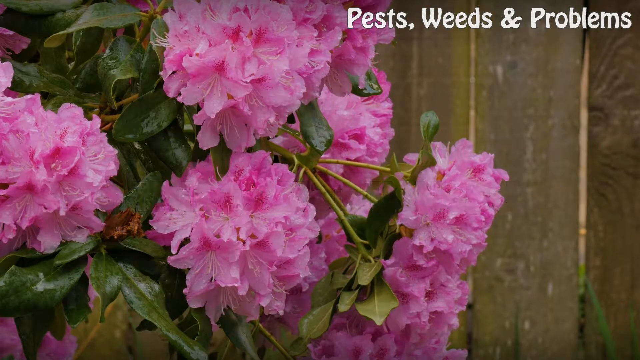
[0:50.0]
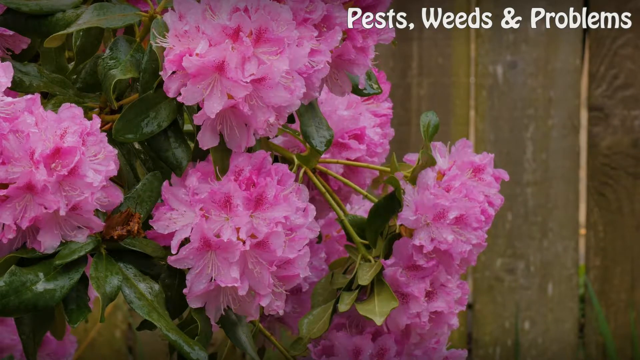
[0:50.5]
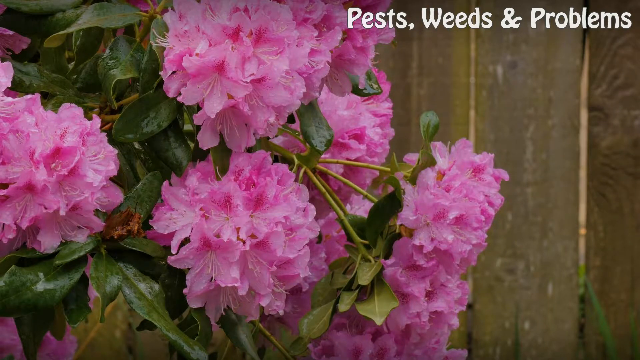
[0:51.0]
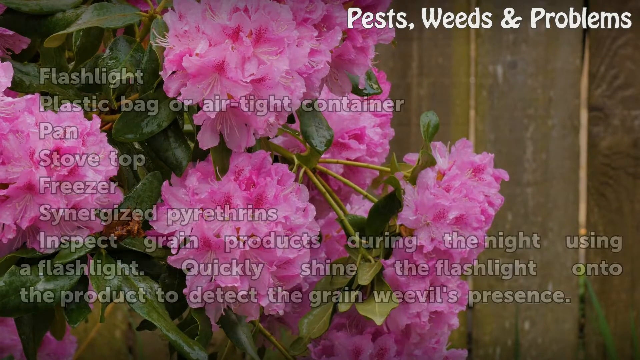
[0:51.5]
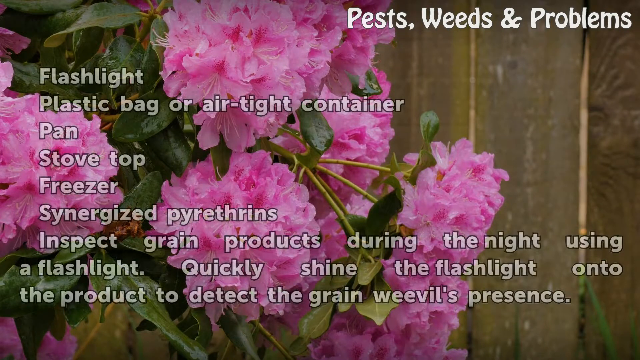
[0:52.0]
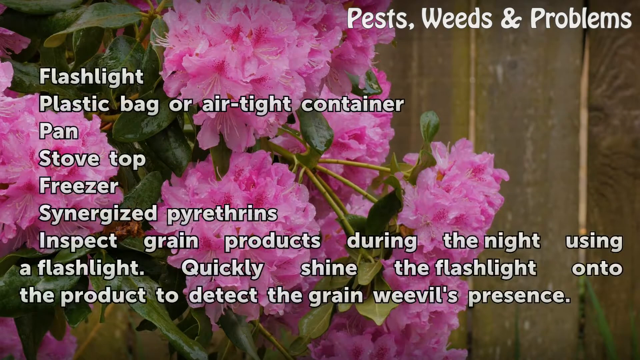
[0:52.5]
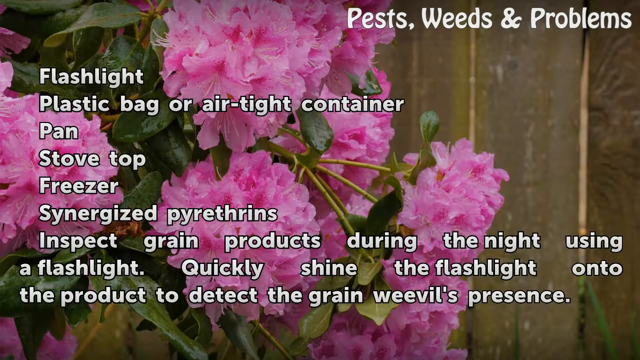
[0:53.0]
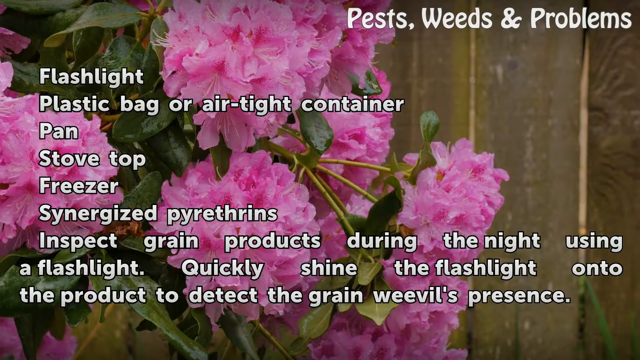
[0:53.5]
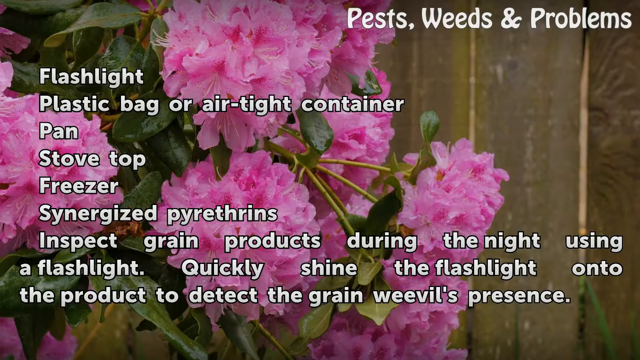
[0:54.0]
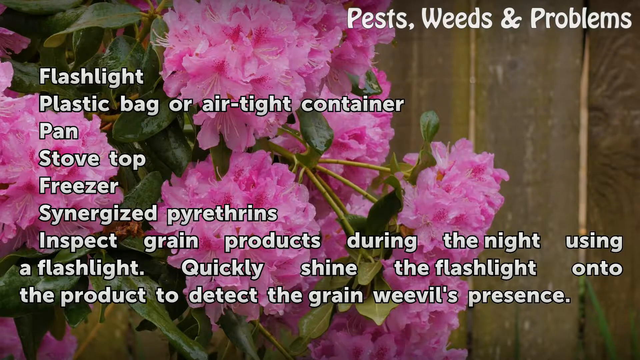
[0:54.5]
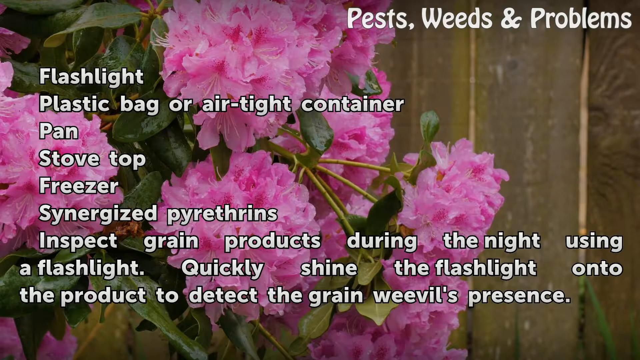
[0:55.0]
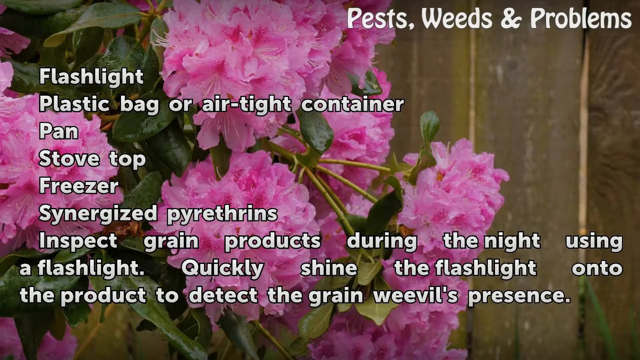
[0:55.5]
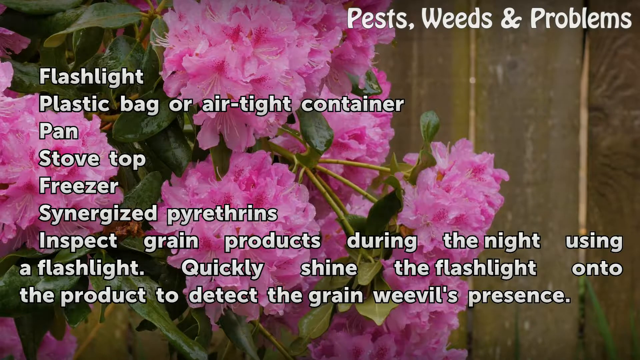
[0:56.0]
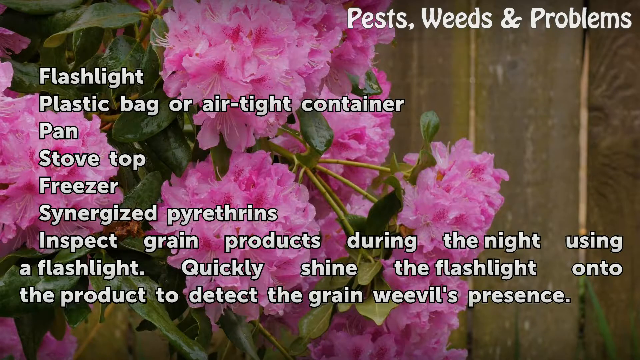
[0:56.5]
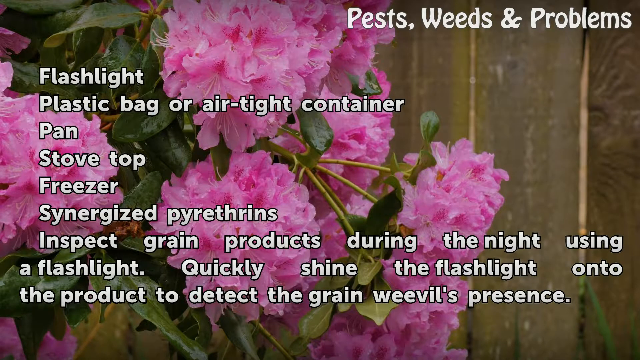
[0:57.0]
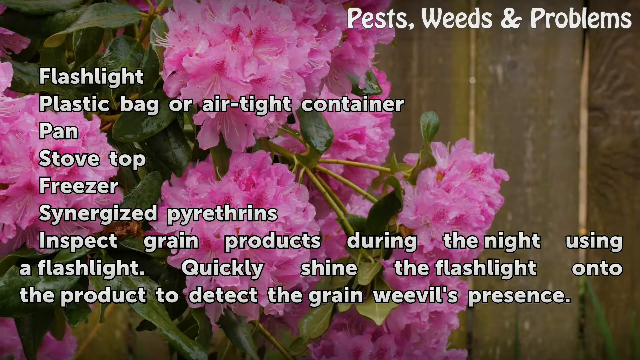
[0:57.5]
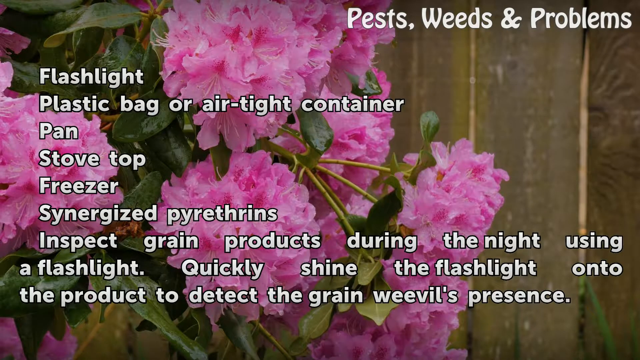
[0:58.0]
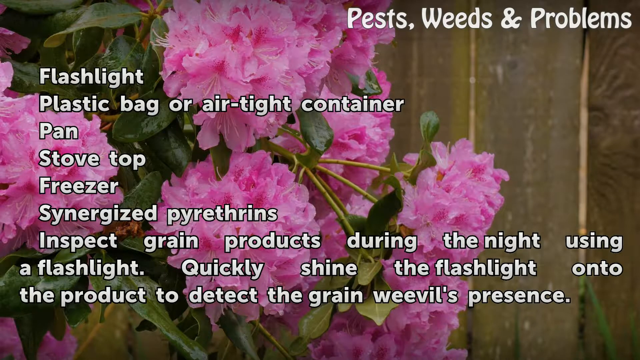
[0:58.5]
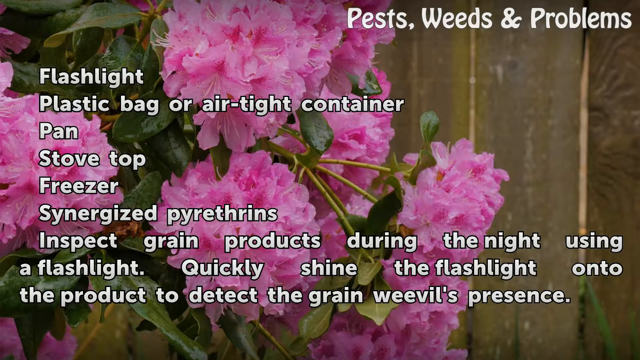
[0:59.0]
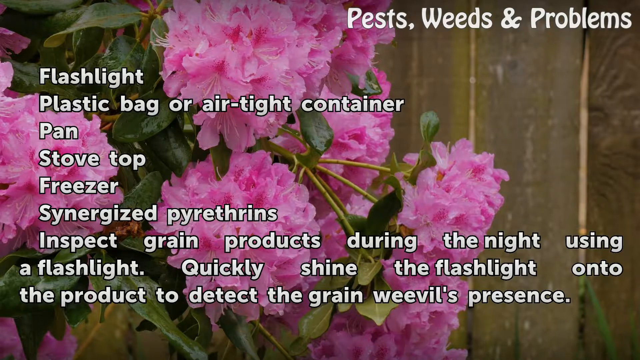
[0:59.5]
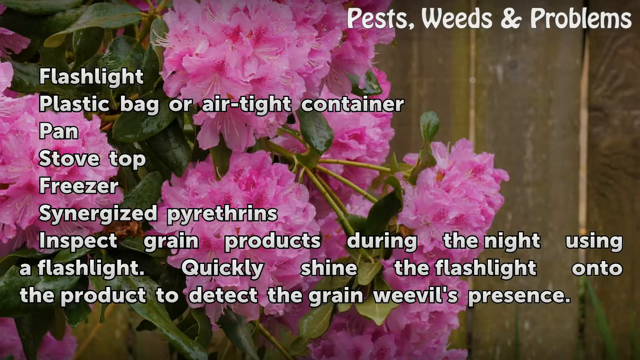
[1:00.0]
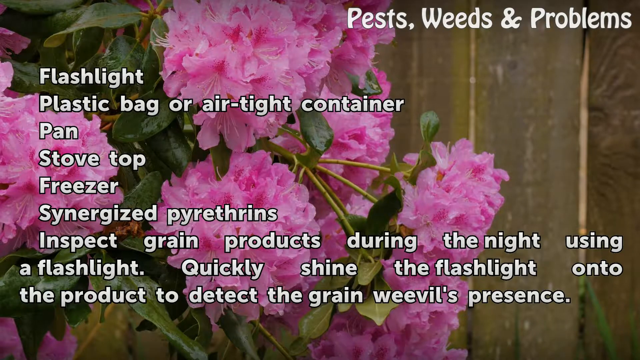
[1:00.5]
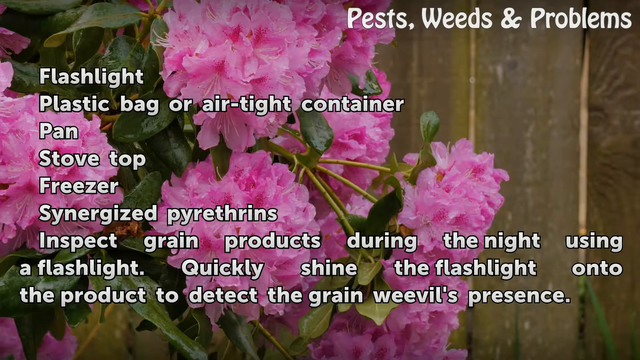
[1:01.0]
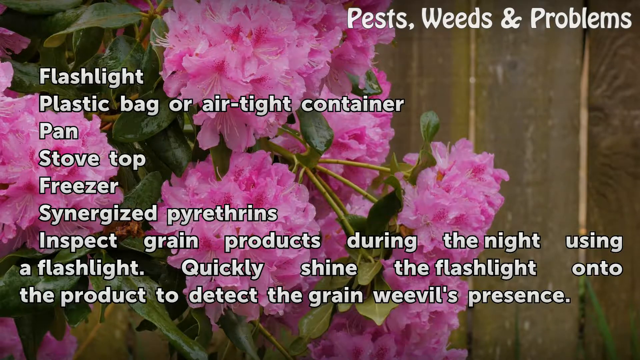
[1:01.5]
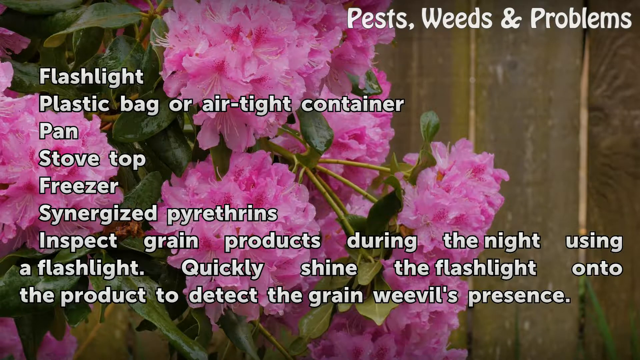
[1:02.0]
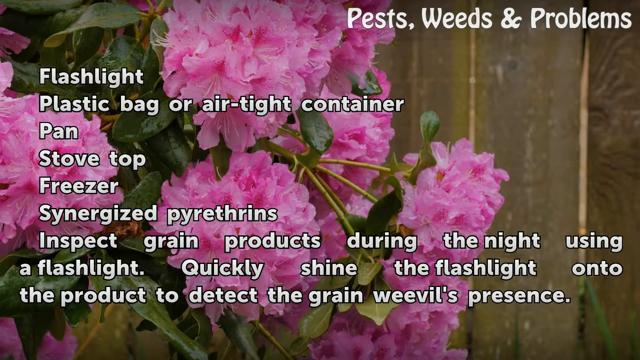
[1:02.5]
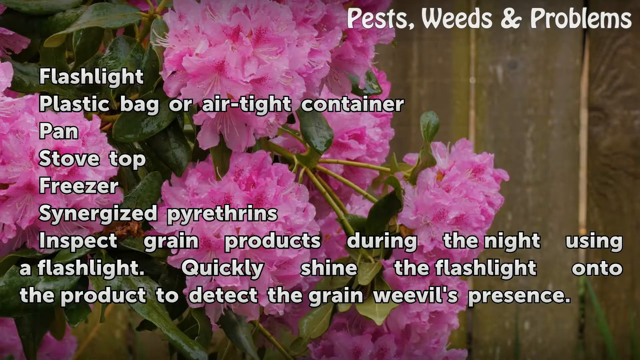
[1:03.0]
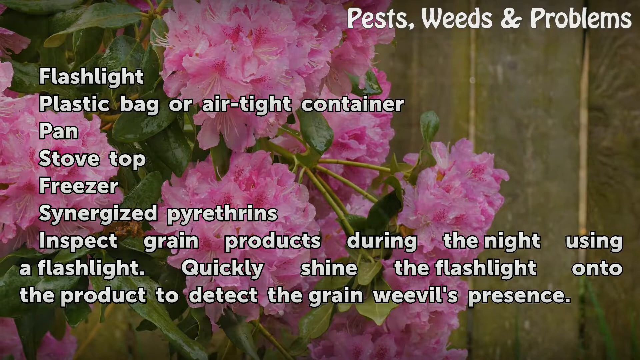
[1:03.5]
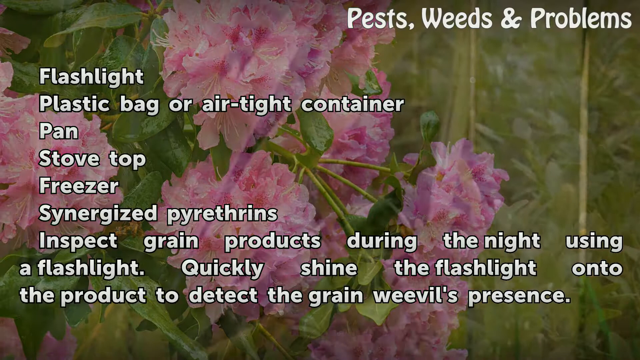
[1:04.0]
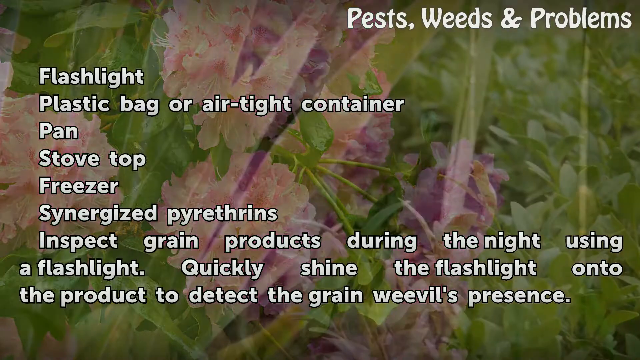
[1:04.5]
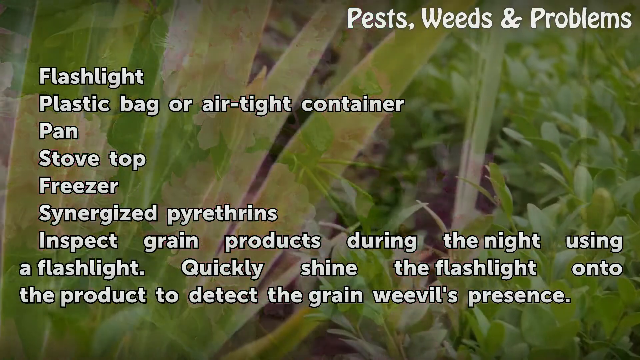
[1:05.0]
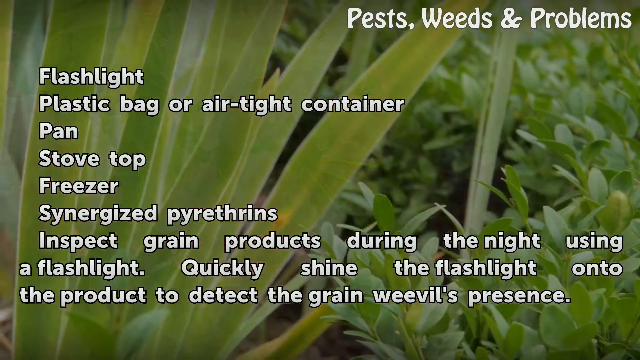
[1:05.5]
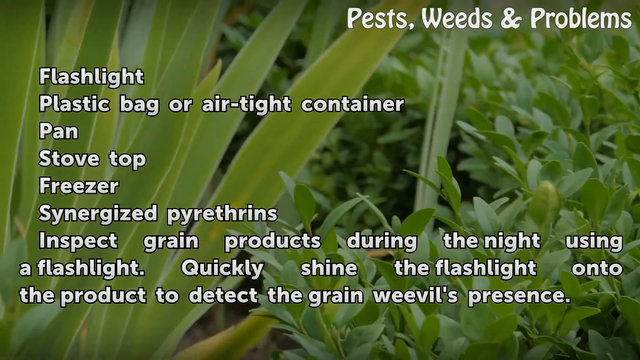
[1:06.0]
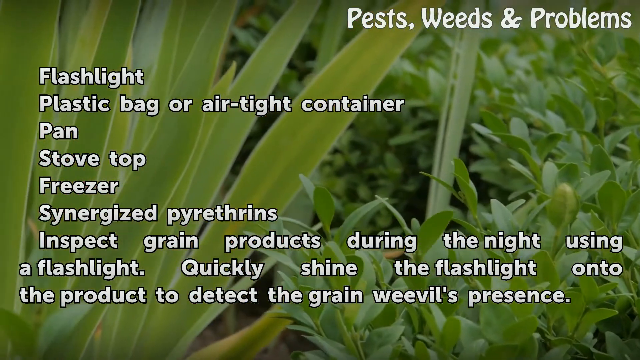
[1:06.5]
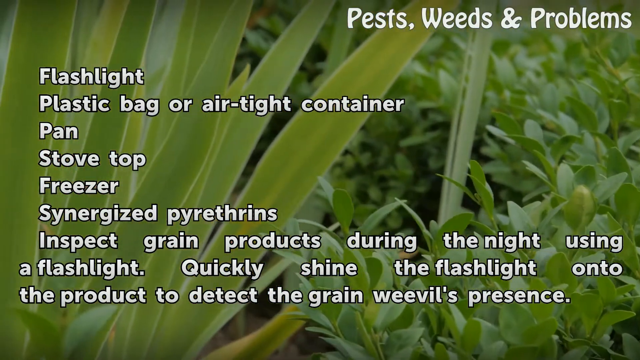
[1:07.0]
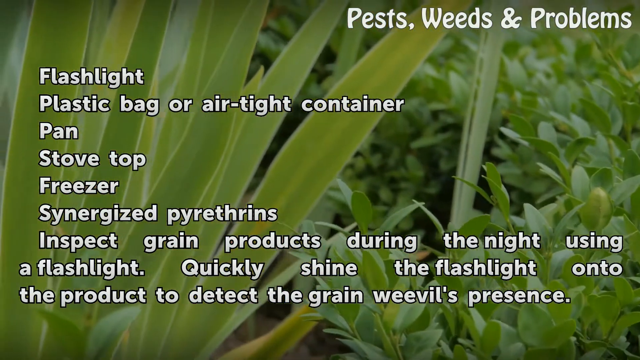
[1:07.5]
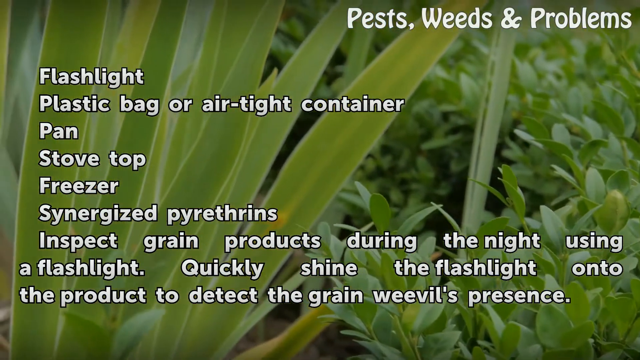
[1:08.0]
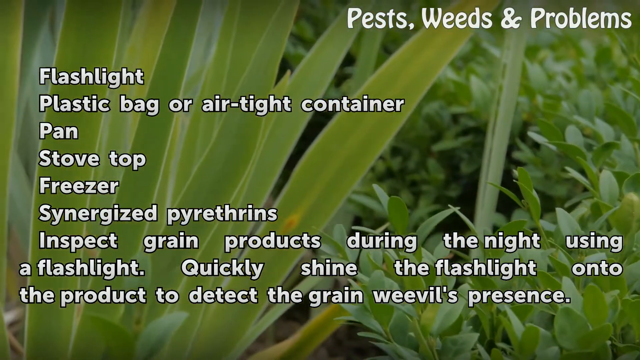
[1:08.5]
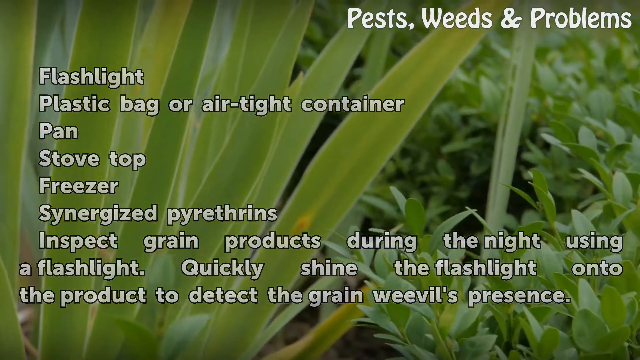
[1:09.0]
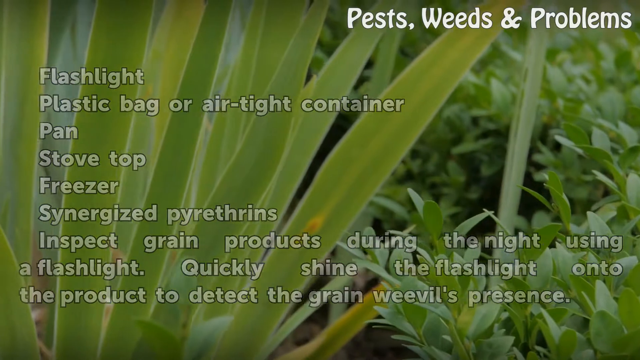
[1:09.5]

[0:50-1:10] Clusters of bright pink flowers appear with thick leaves that look evergreen; they look like the flowers of maybe a rhododendron or a tropical plant. The image changes quickly to a list of items needed to deal with the weevils: "flashlight, plastic bag, airtight container, a pan, a stovetop, a freezer" and synergized pyrethrins. Text follows: "inspect grain products during the night using a flashlight. Quickly shine the flashlight onto the product to detect the grain weevil's presence." The background scrolls while the text is shown, and for a second the pink flowers disappear and a scrolling scene of grass and leaves appears.